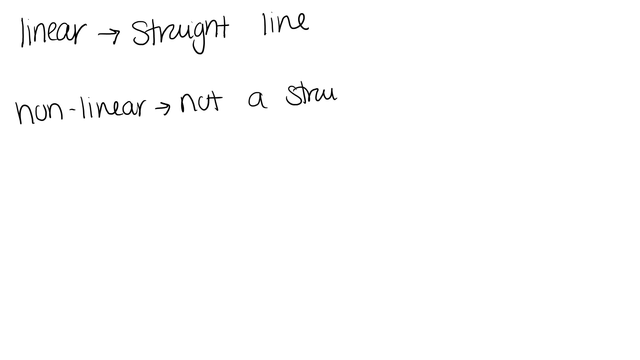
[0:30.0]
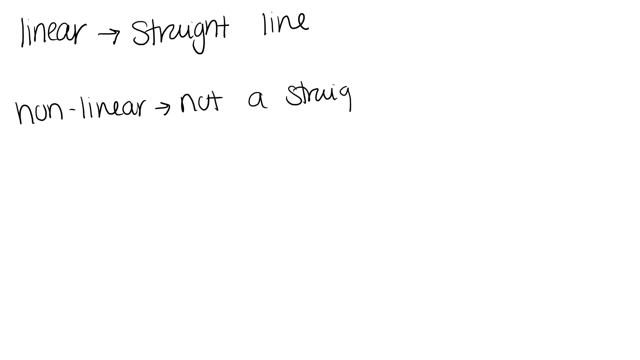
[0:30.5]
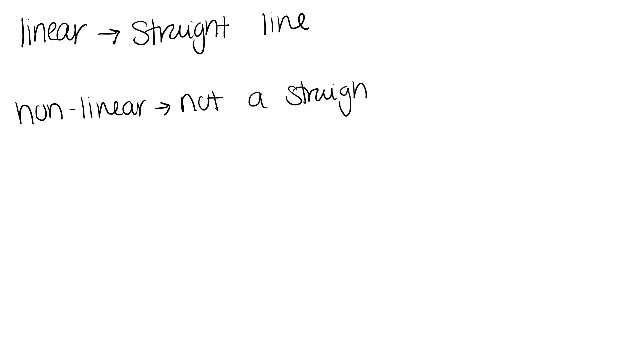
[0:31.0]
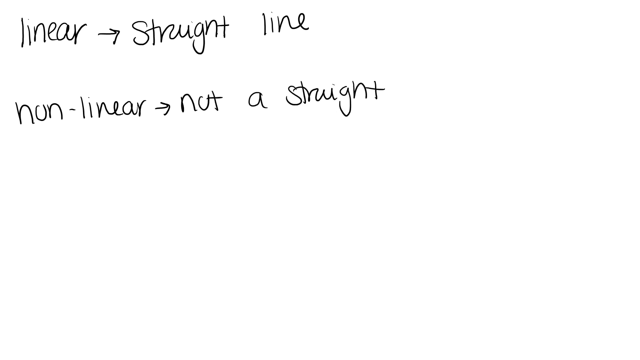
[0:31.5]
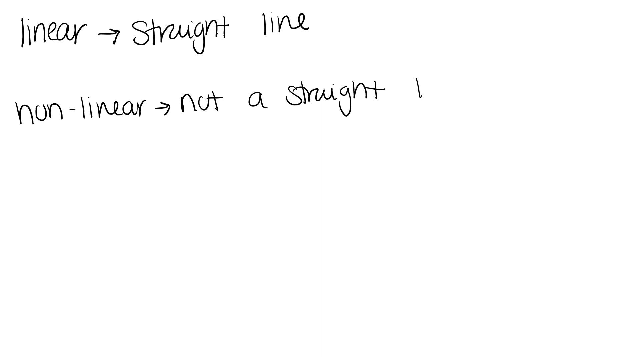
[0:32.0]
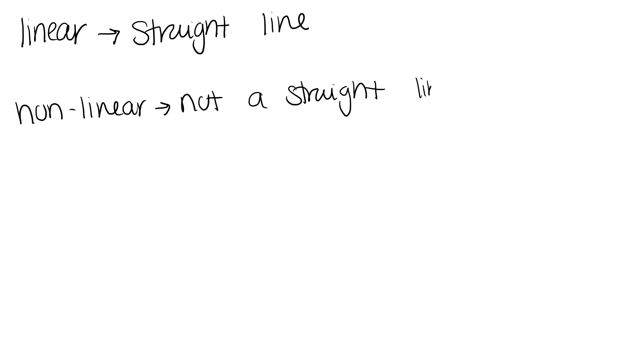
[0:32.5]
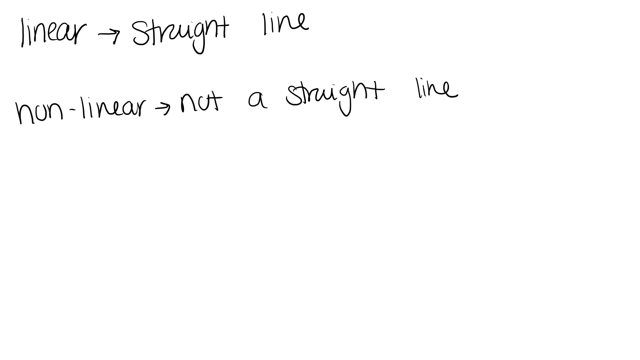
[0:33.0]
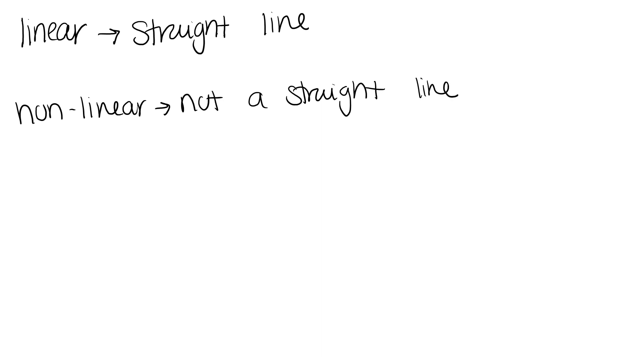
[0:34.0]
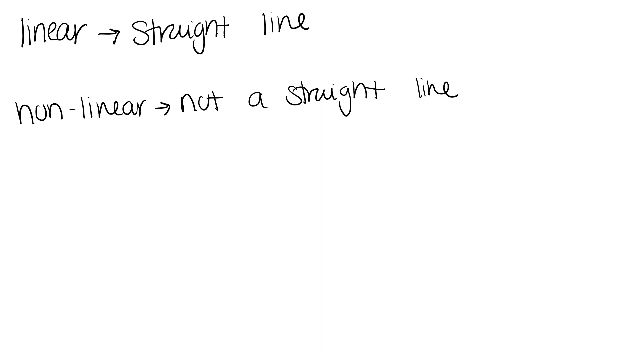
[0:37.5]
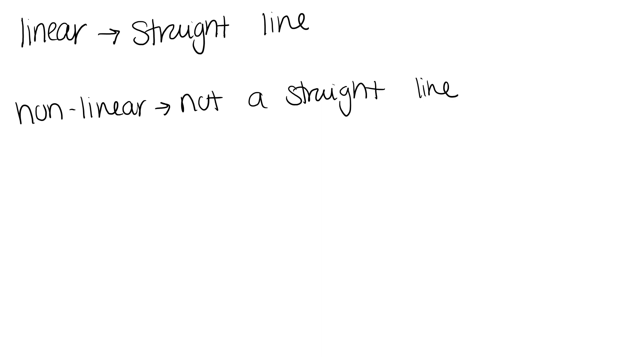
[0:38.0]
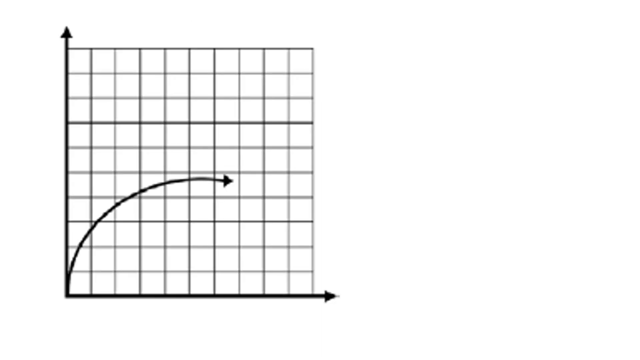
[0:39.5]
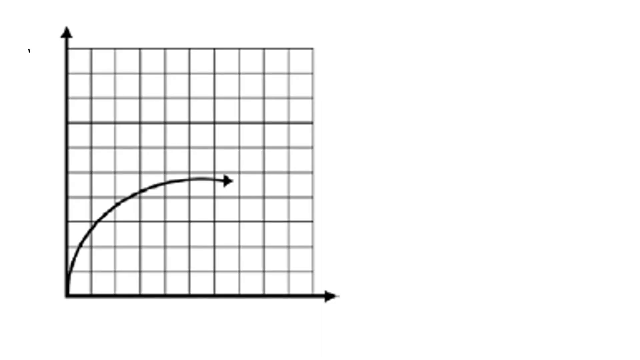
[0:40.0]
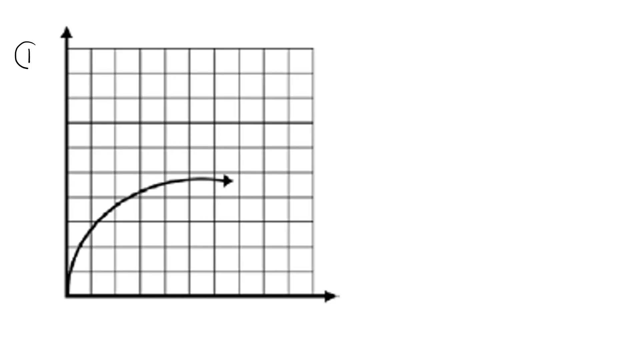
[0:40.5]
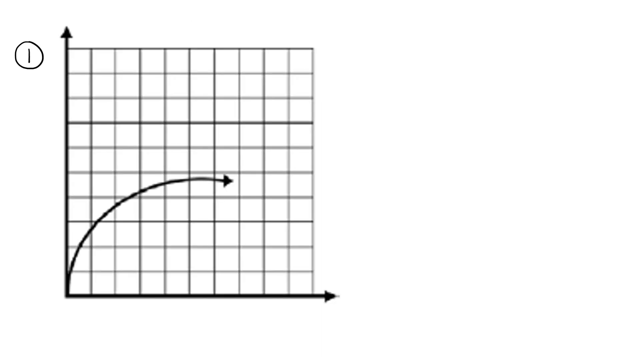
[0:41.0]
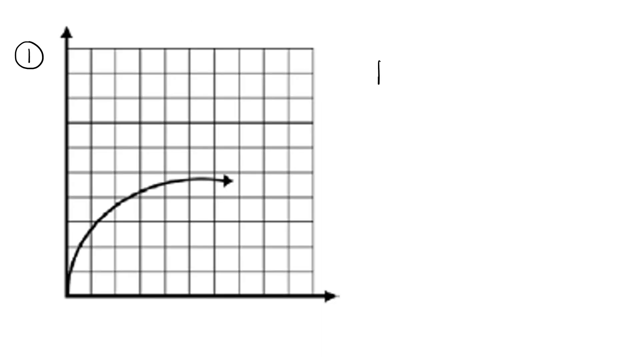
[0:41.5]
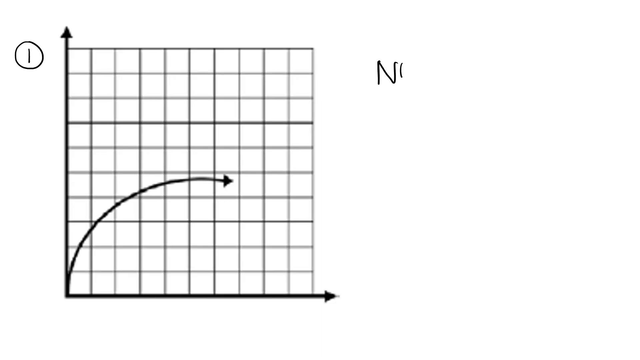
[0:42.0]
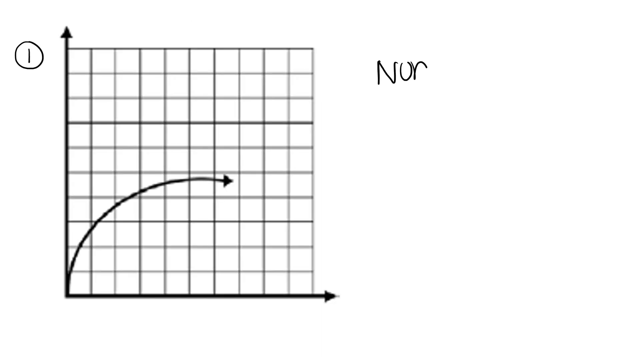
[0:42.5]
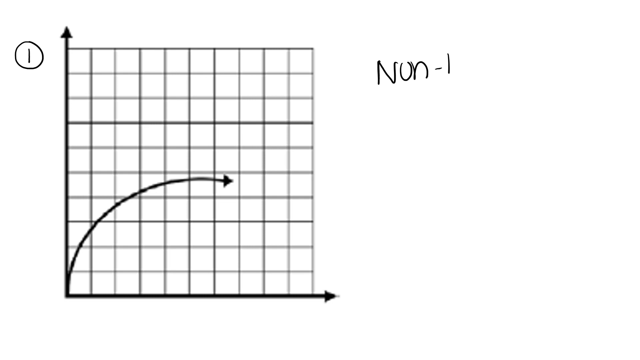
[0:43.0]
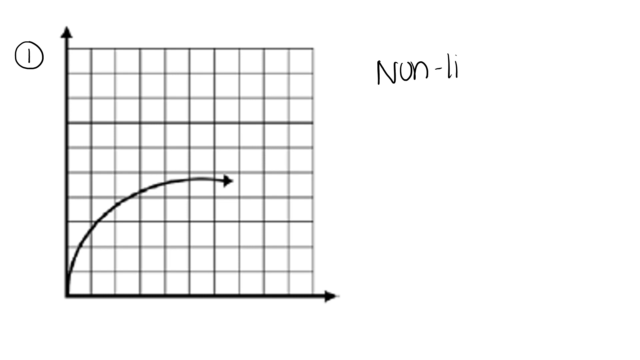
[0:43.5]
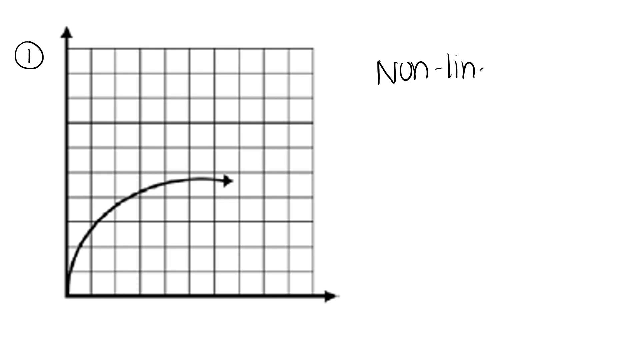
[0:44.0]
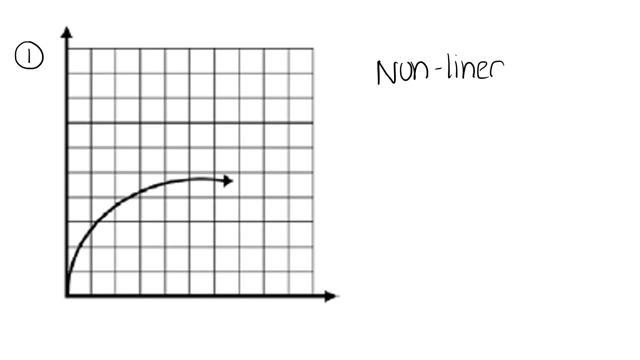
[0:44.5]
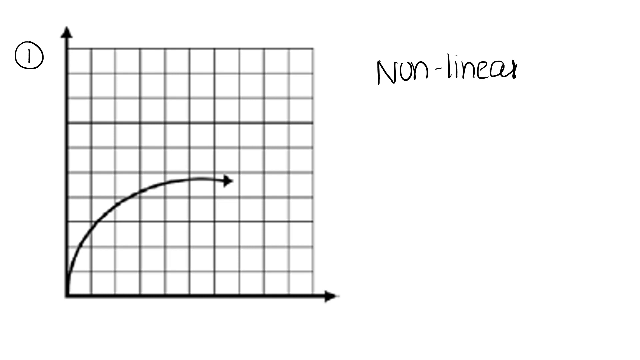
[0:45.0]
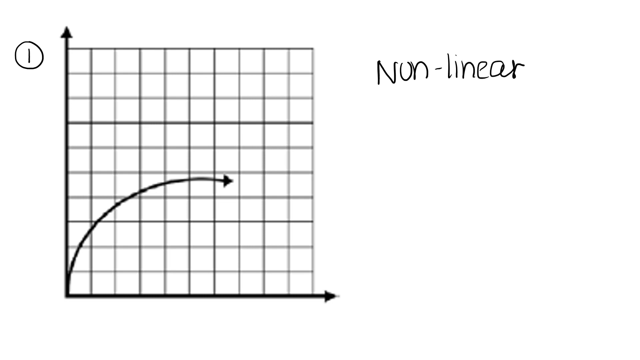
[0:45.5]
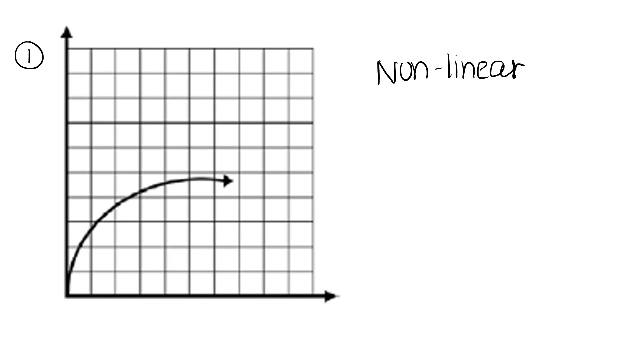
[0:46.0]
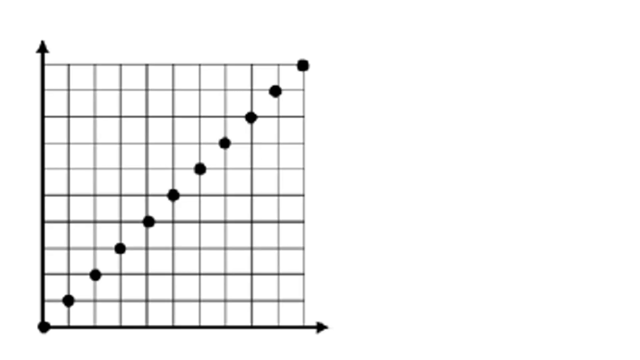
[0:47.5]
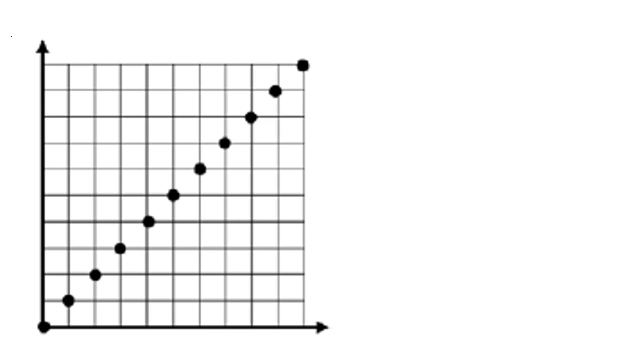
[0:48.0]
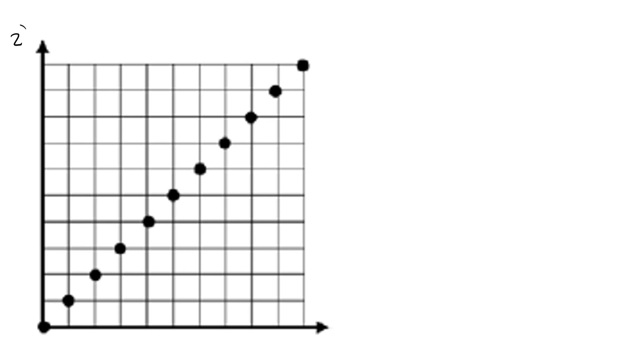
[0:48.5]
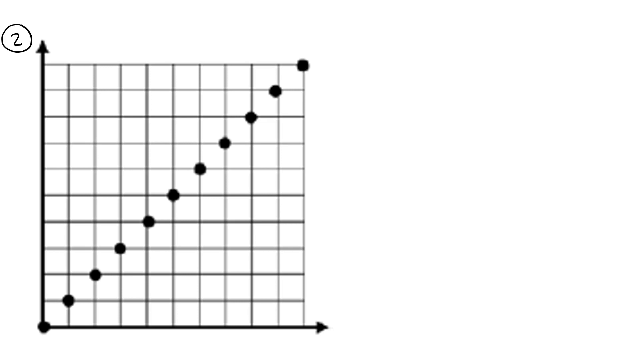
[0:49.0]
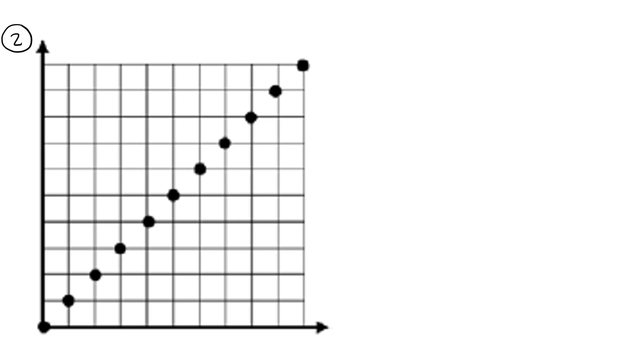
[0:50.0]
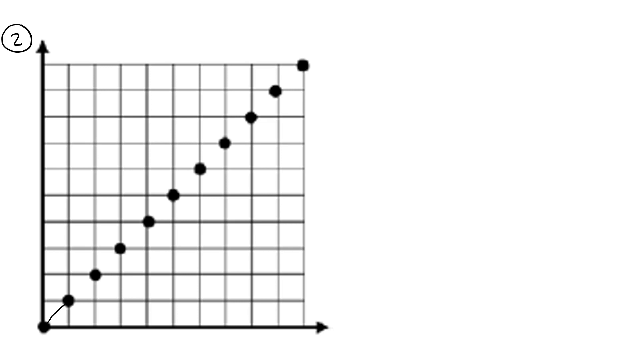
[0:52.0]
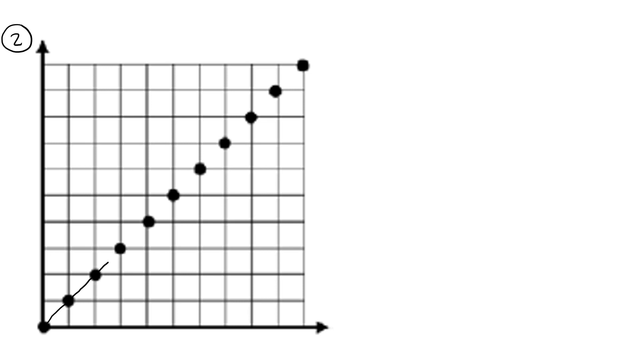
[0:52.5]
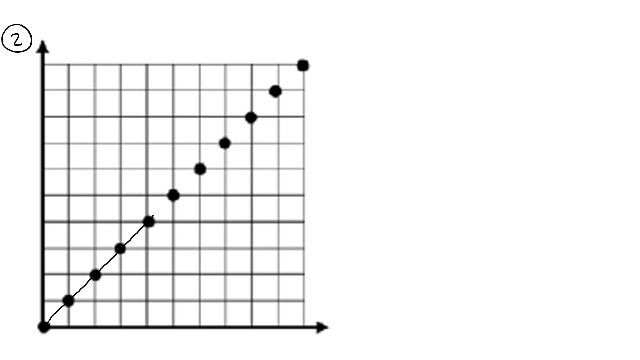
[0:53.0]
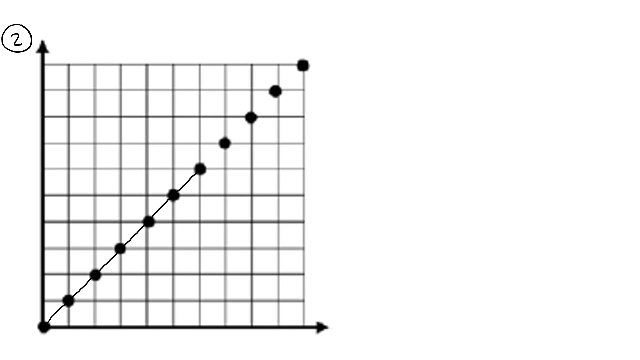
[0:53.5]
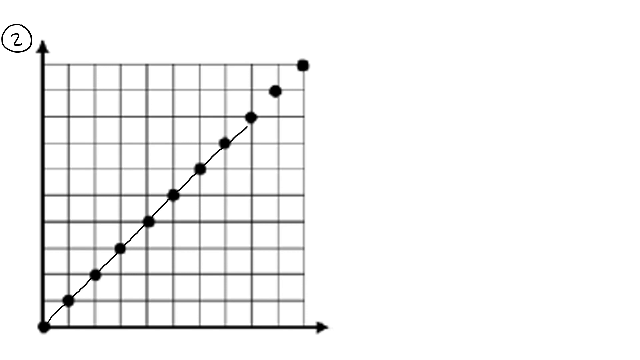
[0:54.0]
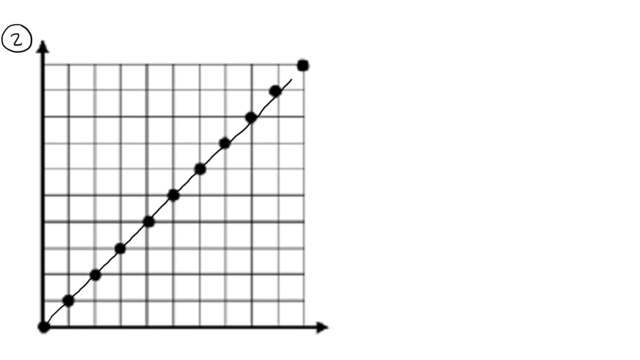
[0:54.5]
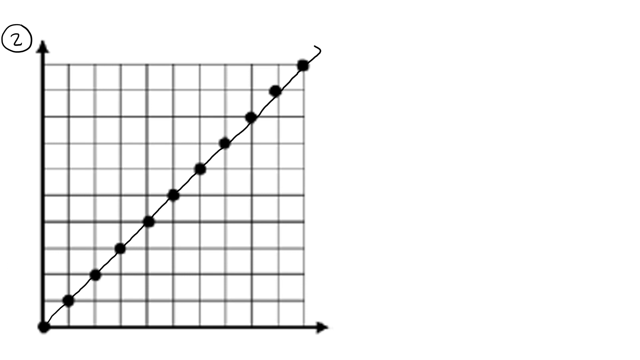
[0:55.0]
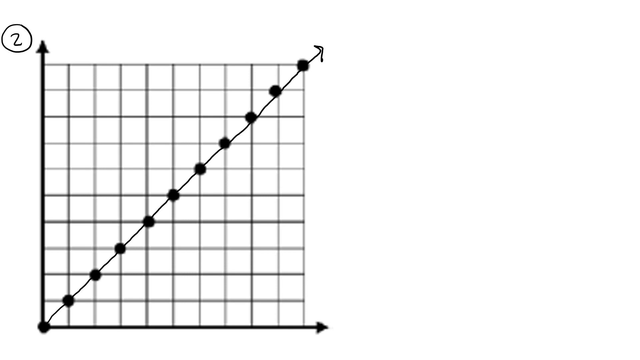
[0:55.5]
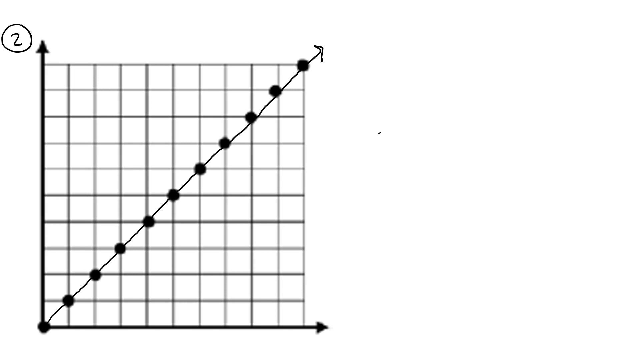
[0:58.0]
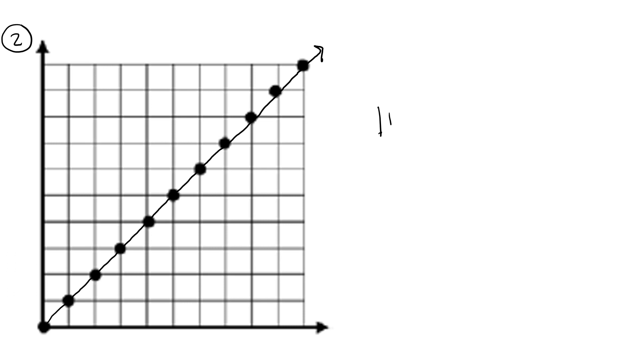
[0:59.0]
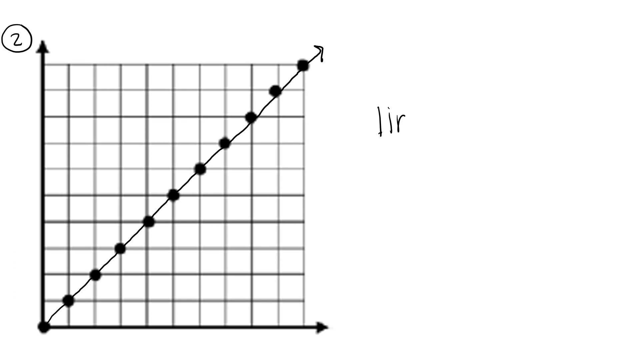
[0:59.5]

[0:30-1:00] The white background still shows the handwritten "linear" with a drawn arrow indicating that linear graphs have a straight line, and the handwritten non-linear heading indicating that non-linear graphs are not a straight line. The writing is in black ink. Next, a diagram of a graph appears with Y and X axes that have pointed arrows at their ends. A curve is drawn inside, on a square-like grid. The number 1 labels this graph, a non-linear graph that is not straight but curved, and "non-linear" is written at the top right.